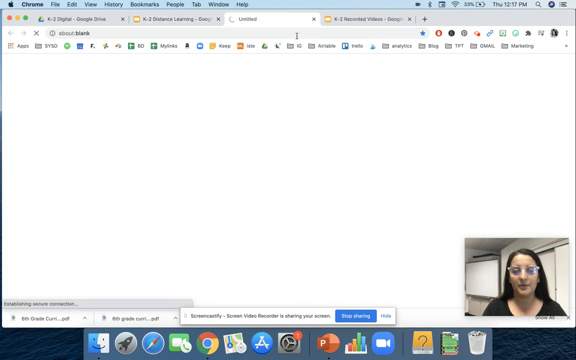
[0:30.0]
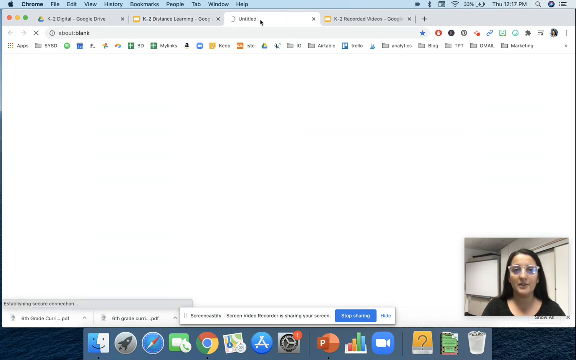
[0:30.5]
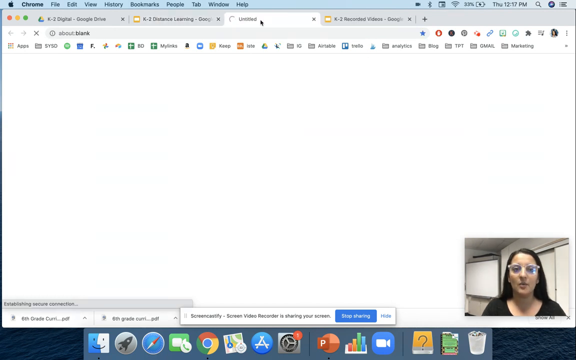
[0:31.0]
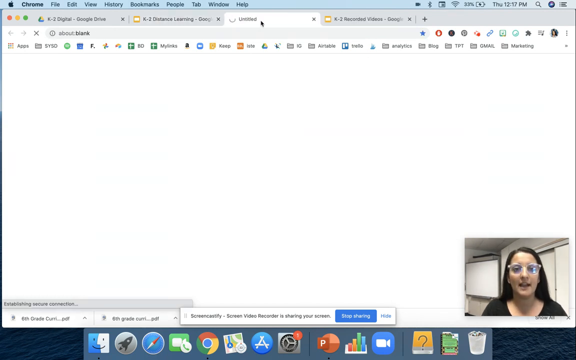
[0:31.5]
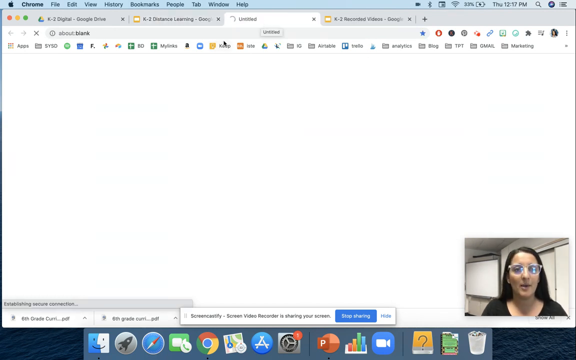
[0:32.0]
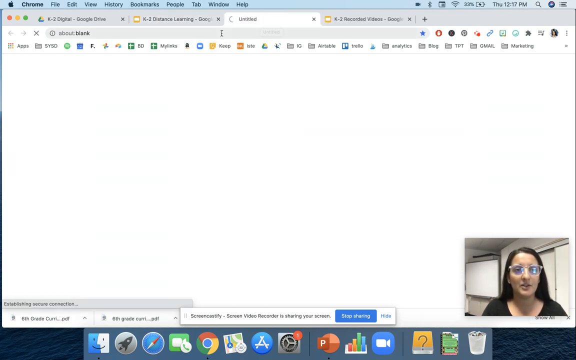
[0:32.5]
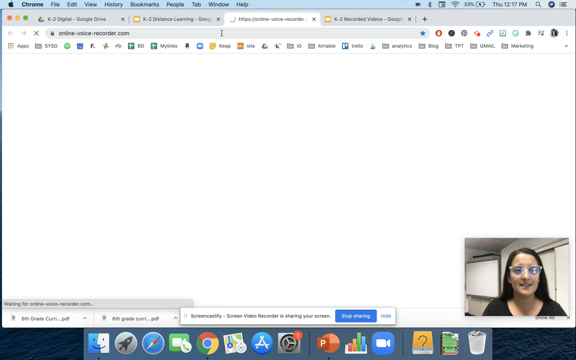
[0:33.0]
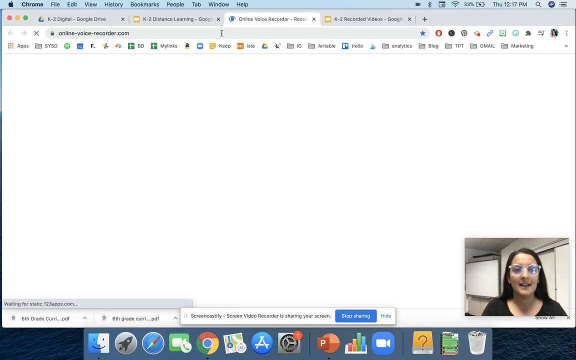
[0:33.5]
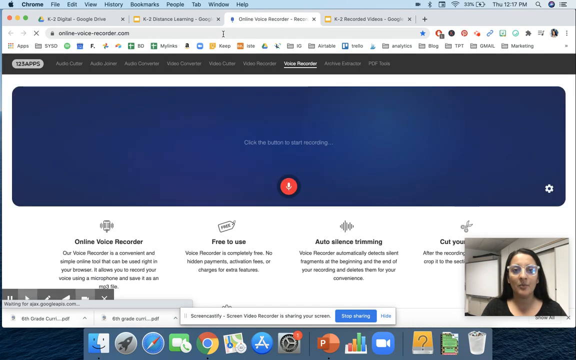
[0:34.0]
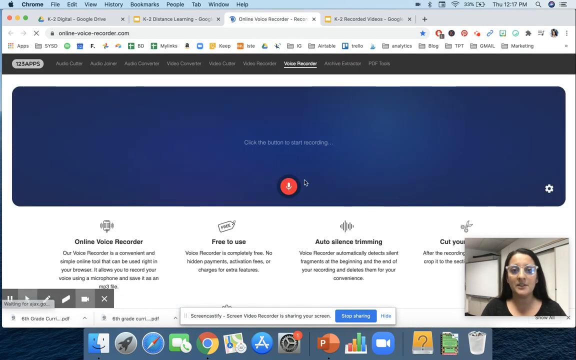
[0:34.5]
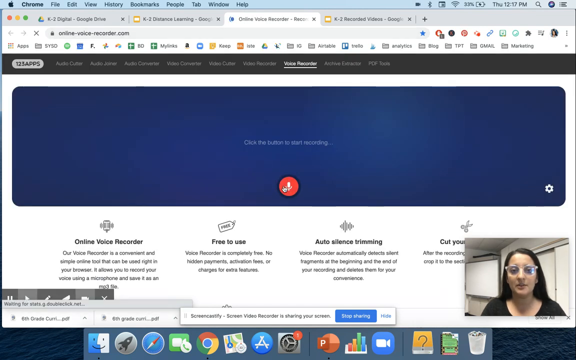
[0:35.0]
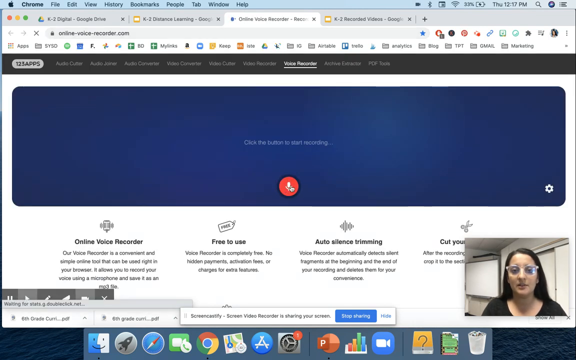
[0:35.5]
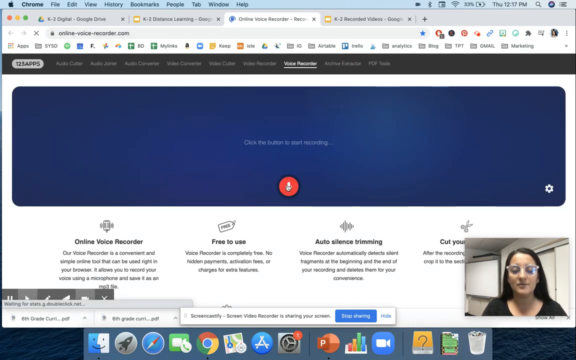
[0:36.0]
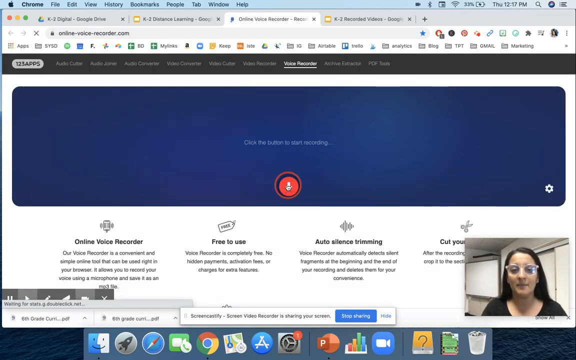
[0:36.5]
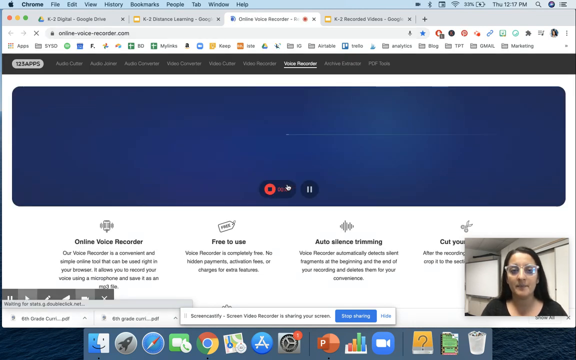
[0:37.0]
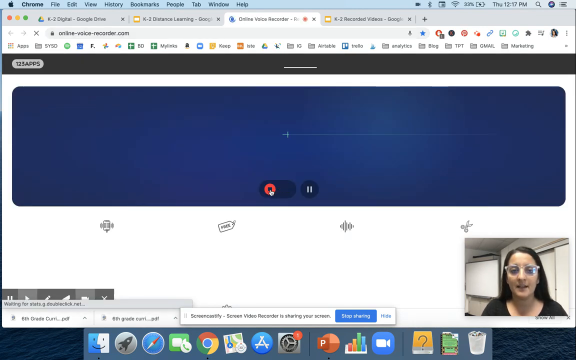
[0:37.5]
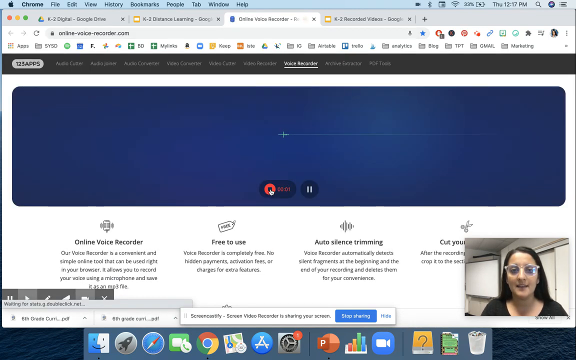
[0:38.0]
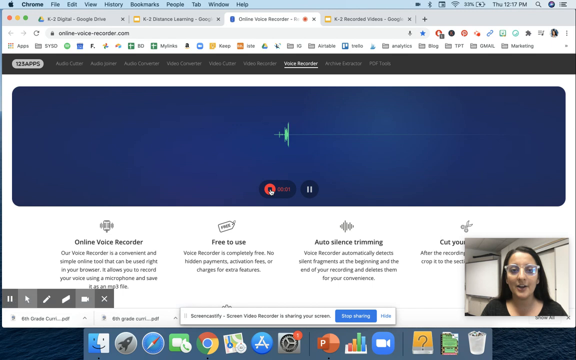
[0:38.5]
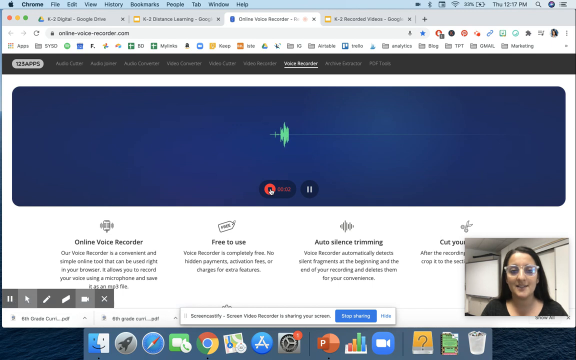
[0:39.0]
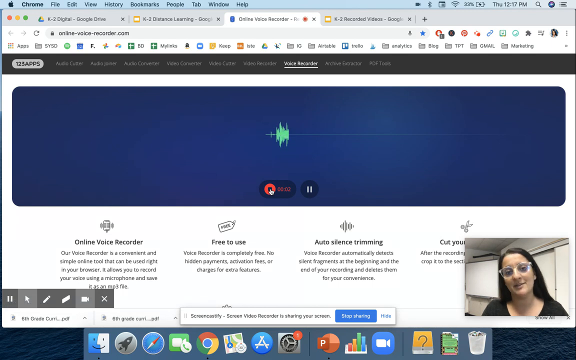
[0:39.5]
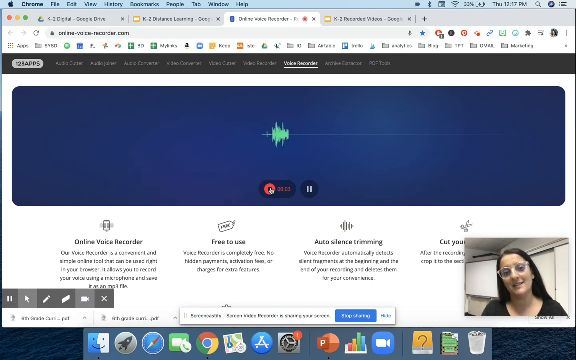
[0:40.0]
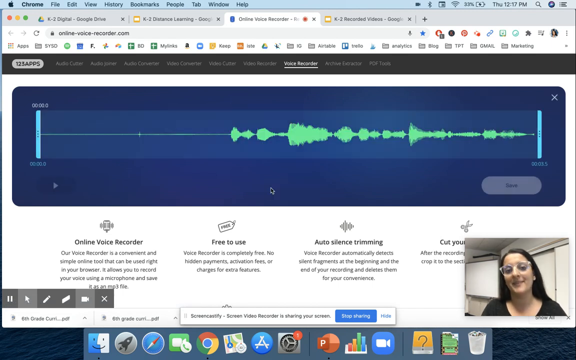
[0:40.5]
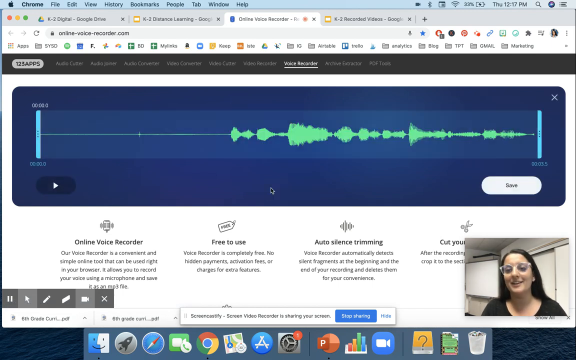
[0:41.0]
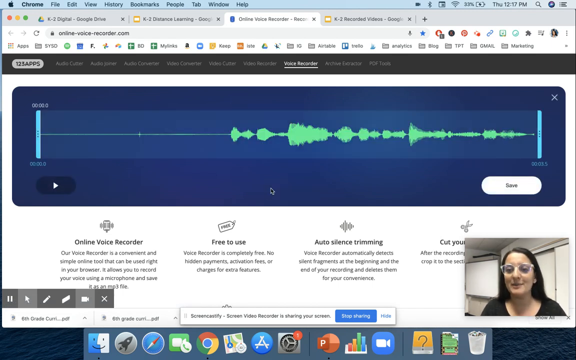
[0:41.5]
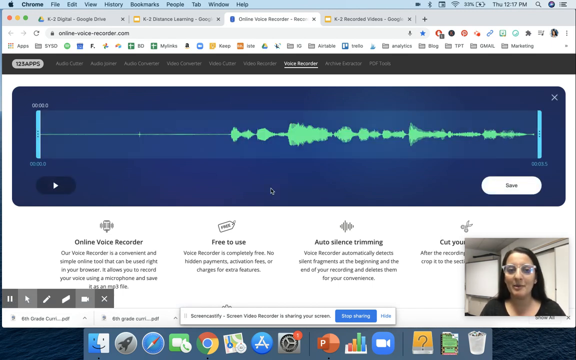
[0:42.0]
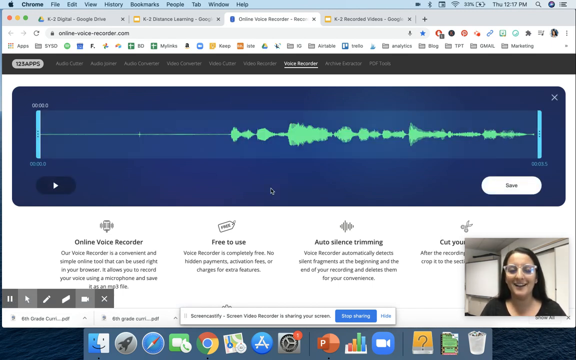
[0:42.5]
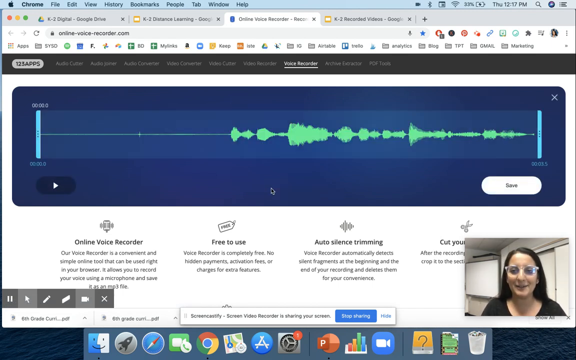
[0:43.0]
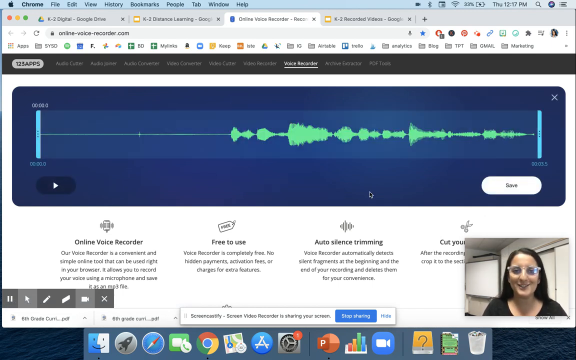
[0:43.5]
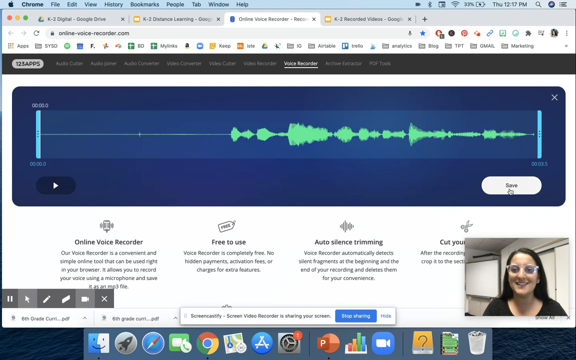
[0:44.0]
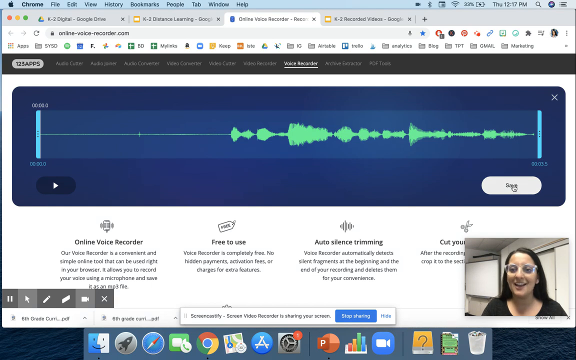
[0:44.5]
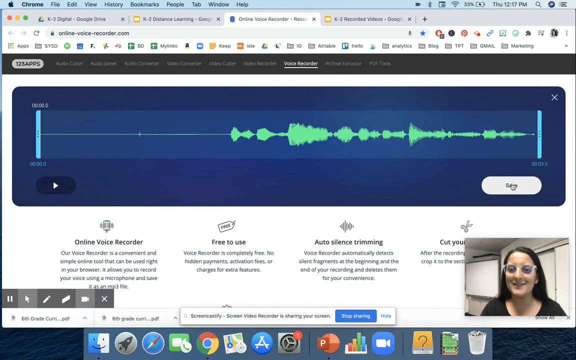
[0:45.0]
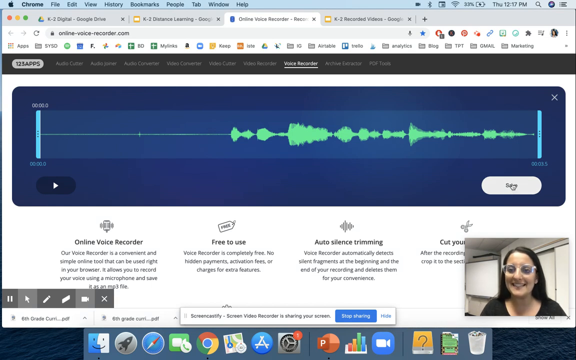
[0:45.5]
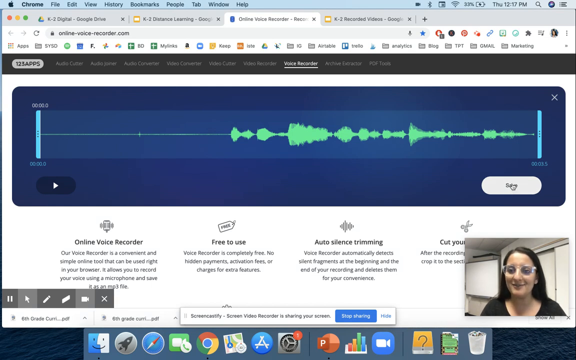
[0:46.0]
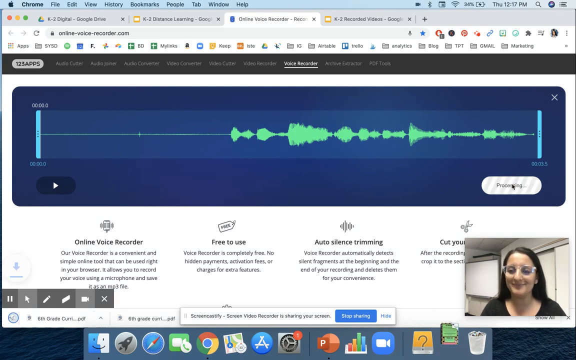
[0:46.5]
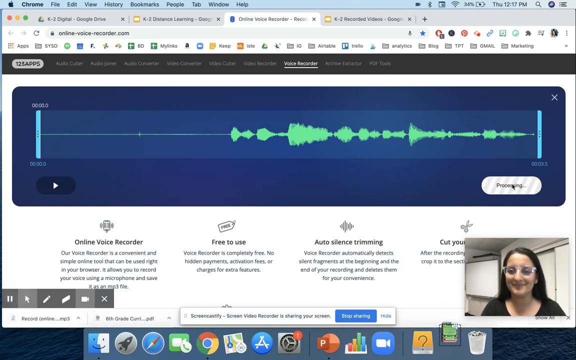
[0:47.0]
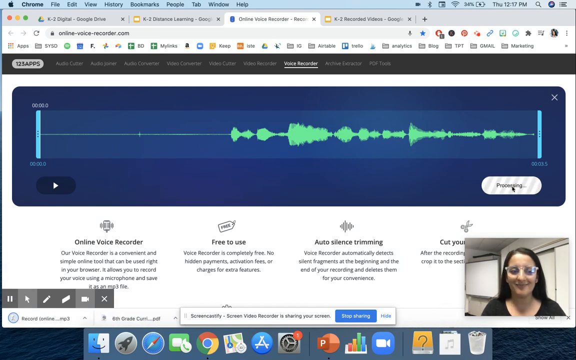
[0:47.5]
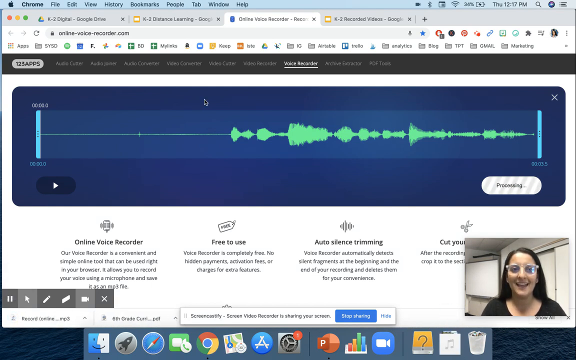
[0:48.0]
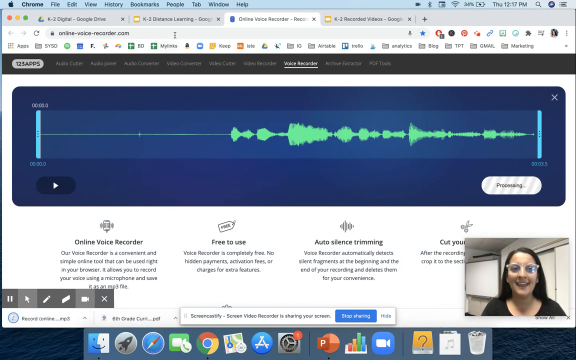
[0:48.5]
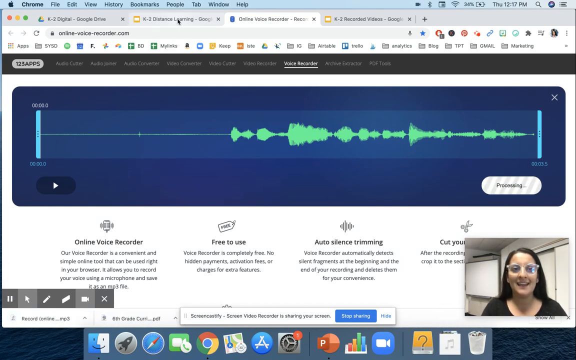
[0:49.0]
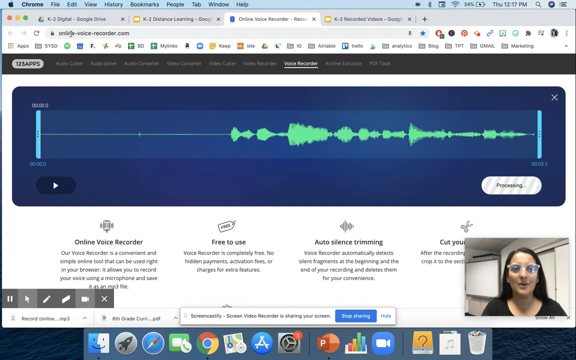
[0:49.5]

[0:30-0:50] The external link the teacher clicked pulls up another window on the shared screen, a website about a voice recorder and how to record a voice clip. The teacher navigates around the screen with the mouse and clicks on an example audio clip near the top of the screen, which shows neon green sound bars on a blue background. She then clicks a button called "processing" just below and to the right of the green audio bars, and the clip finishes processing. The woman teaching is the main subject and appears in a separate small screen in the bottom right. She has long dark hair, wears clear glasses, and appears to be in her mid to late 20s.